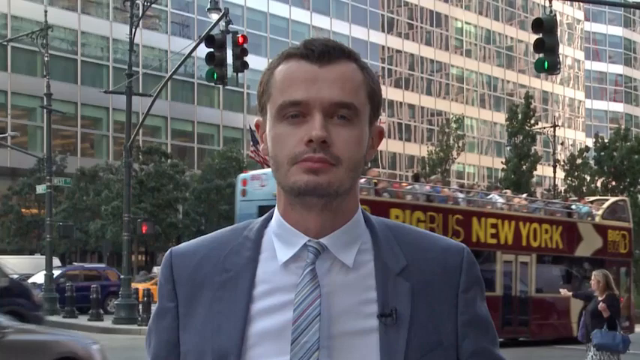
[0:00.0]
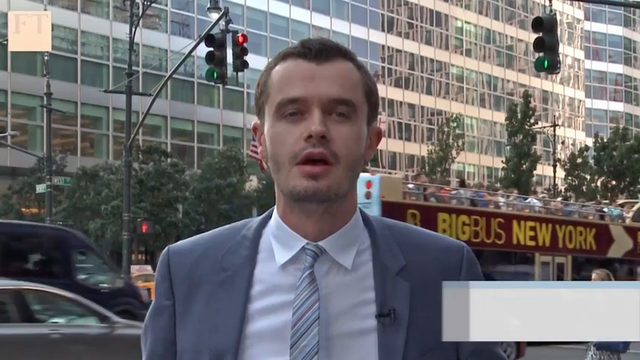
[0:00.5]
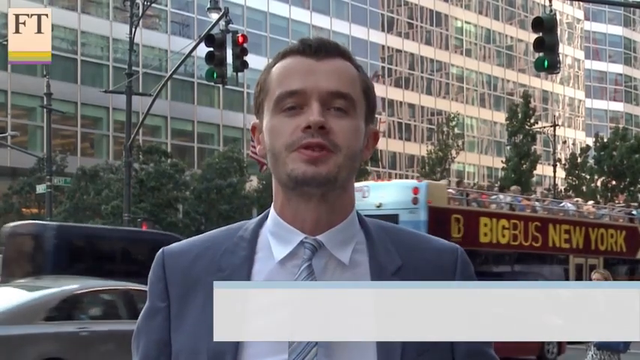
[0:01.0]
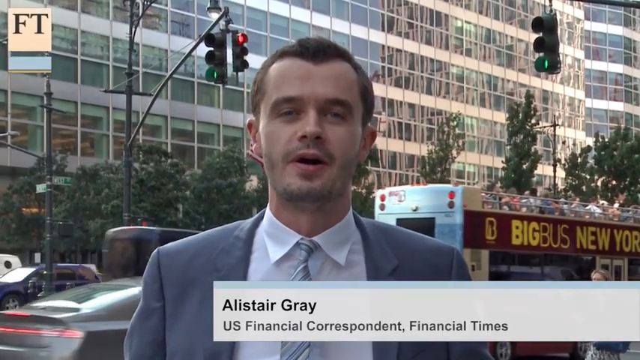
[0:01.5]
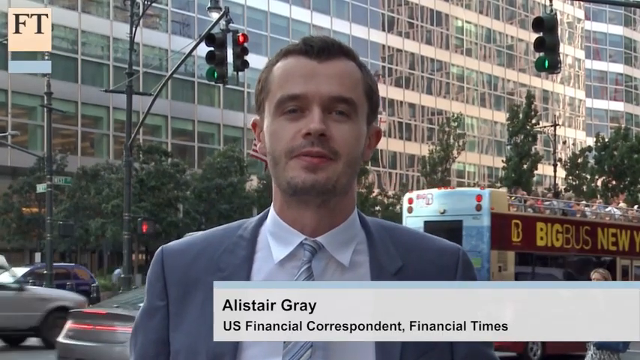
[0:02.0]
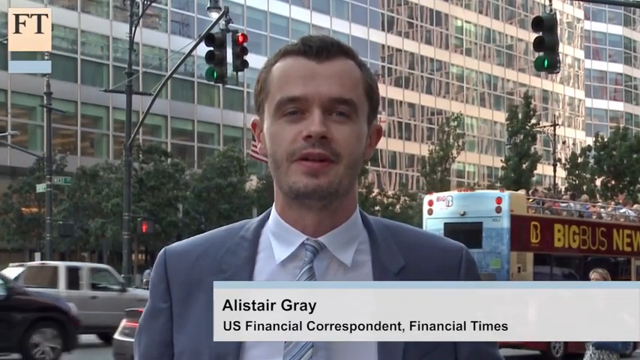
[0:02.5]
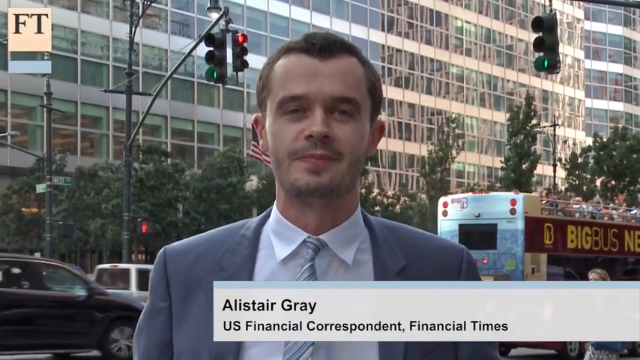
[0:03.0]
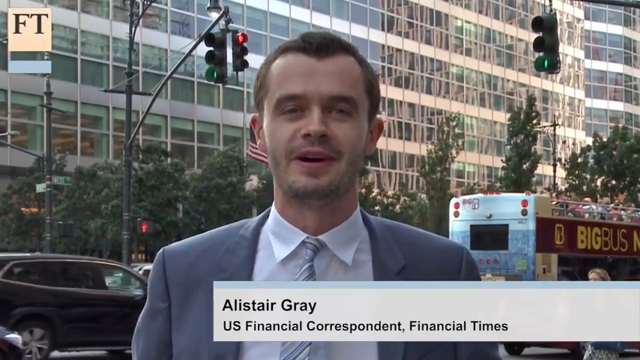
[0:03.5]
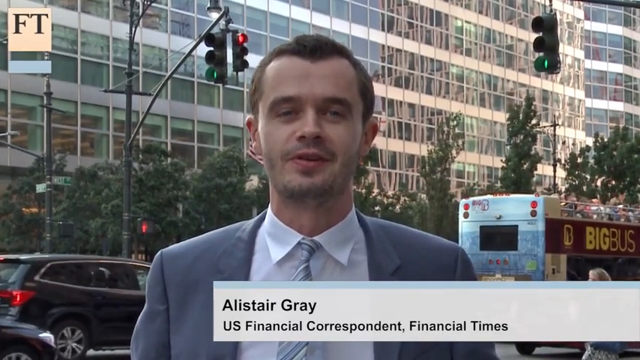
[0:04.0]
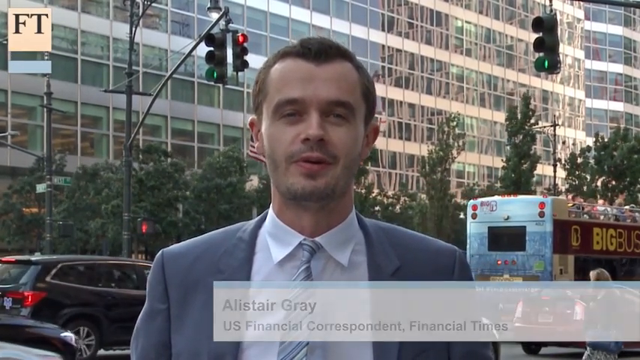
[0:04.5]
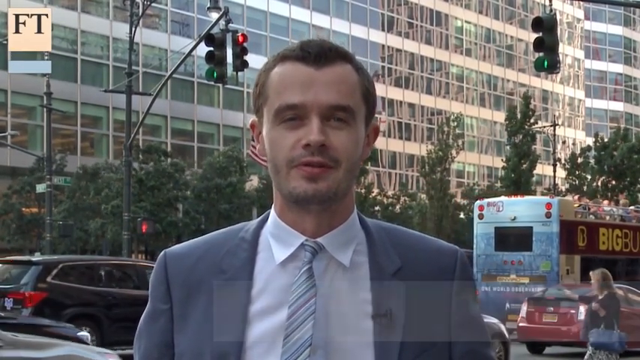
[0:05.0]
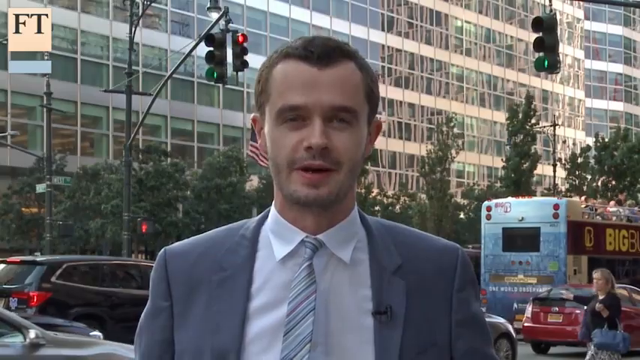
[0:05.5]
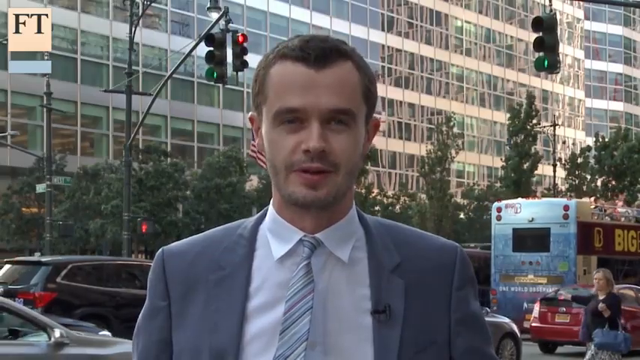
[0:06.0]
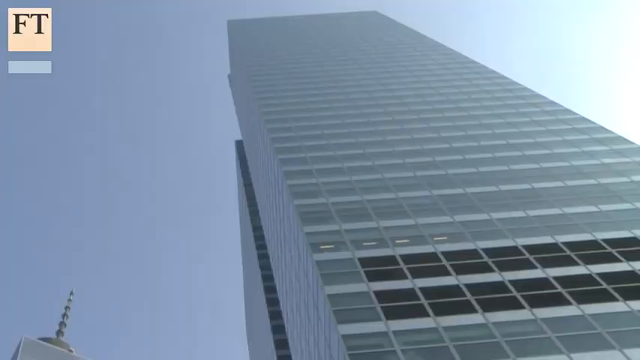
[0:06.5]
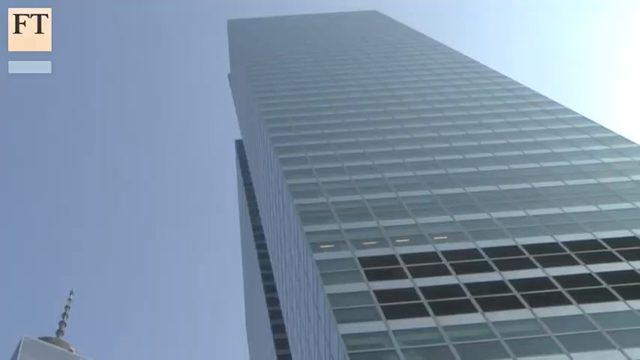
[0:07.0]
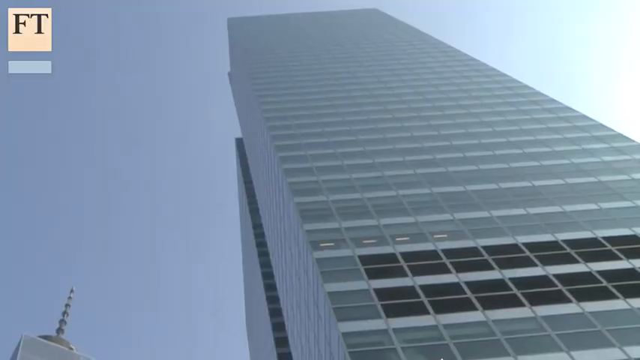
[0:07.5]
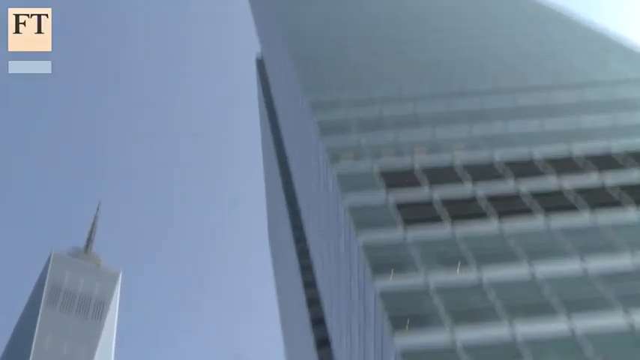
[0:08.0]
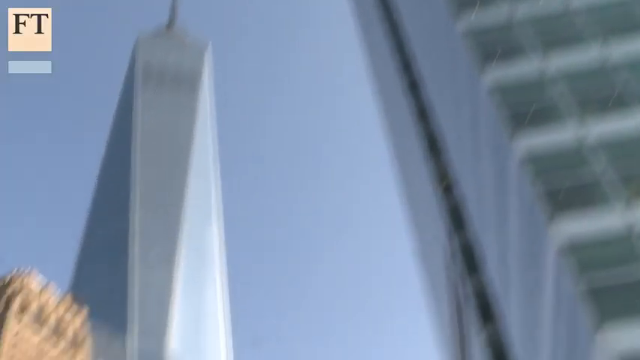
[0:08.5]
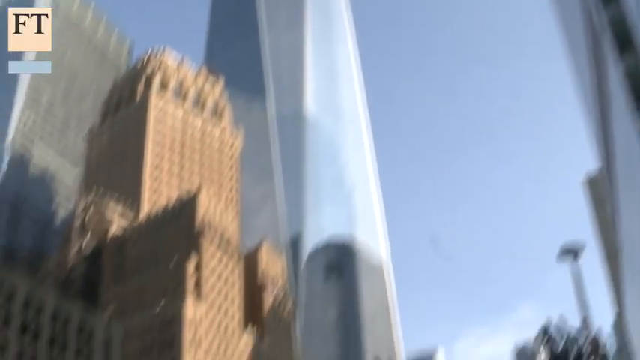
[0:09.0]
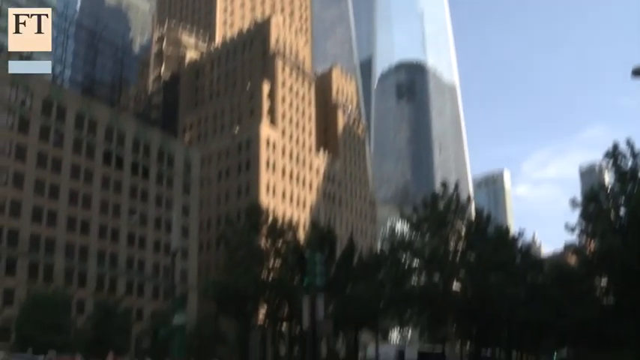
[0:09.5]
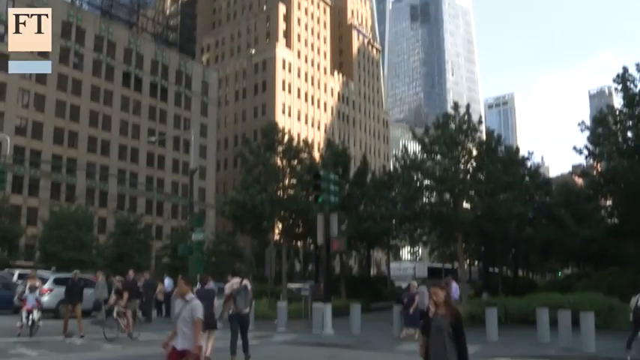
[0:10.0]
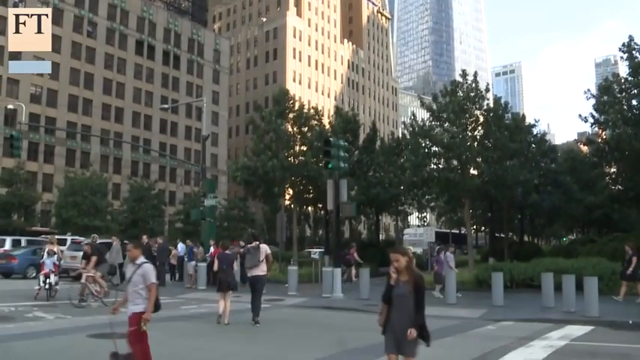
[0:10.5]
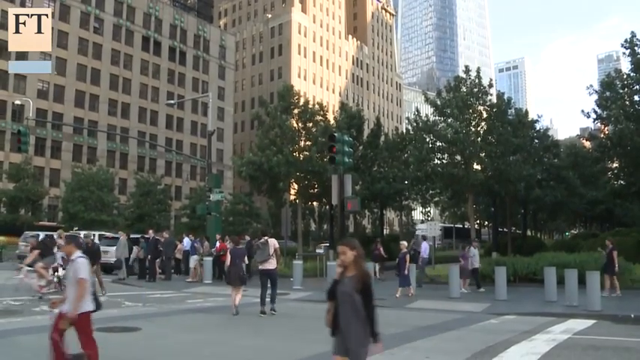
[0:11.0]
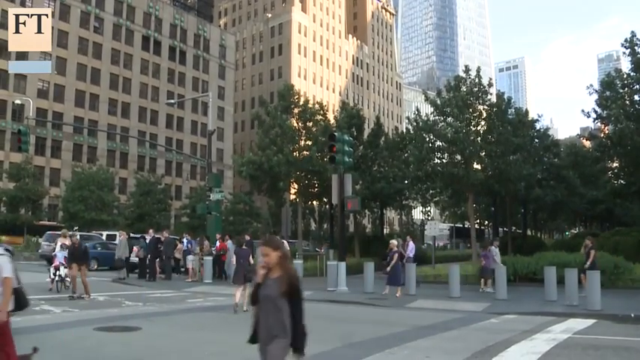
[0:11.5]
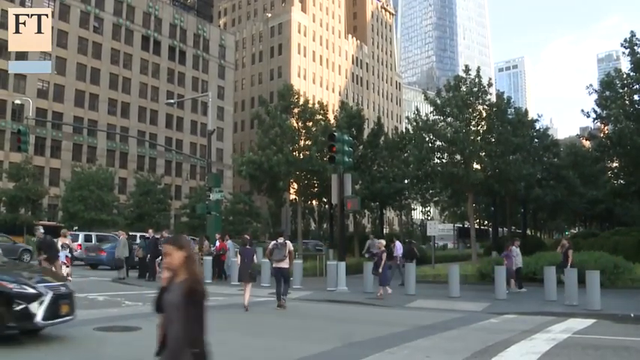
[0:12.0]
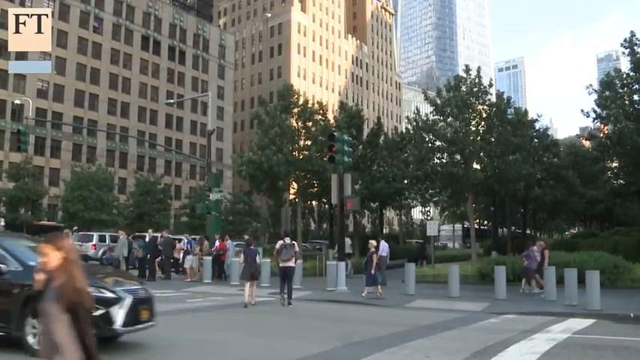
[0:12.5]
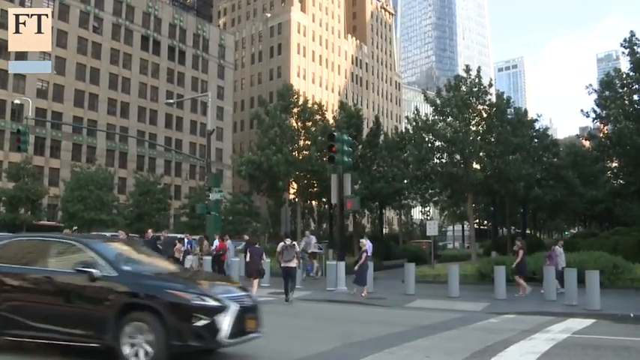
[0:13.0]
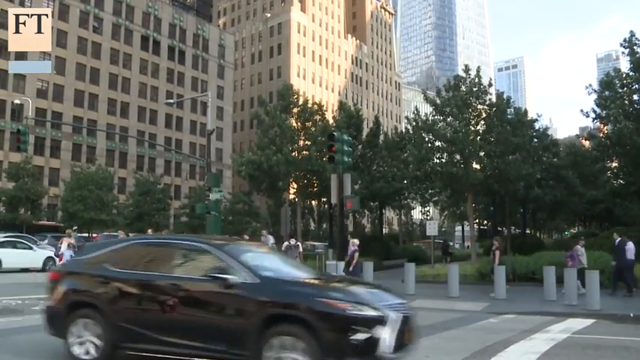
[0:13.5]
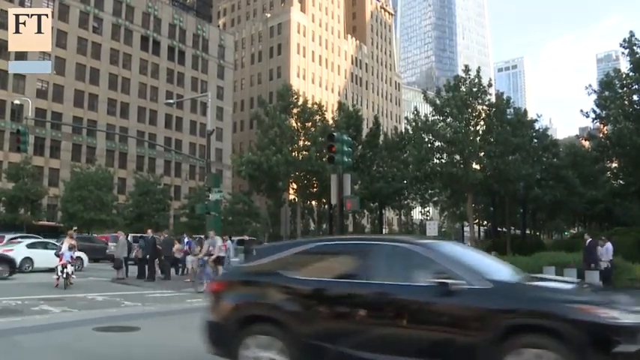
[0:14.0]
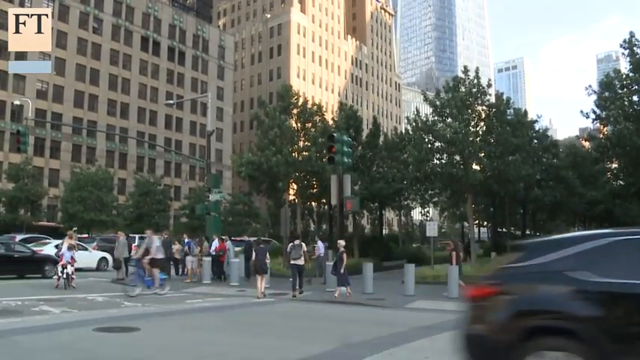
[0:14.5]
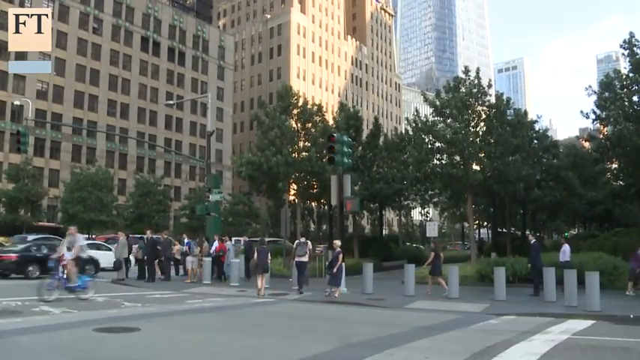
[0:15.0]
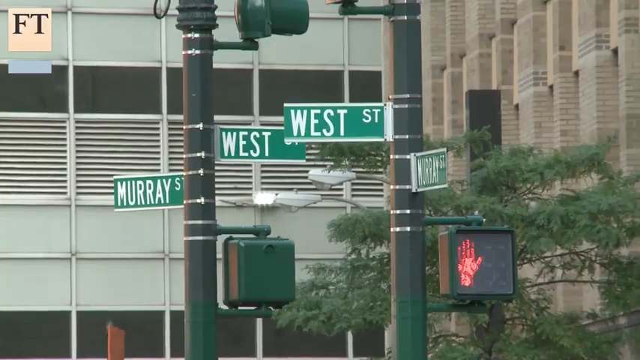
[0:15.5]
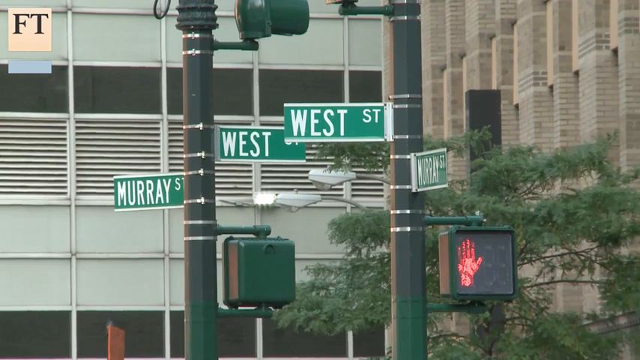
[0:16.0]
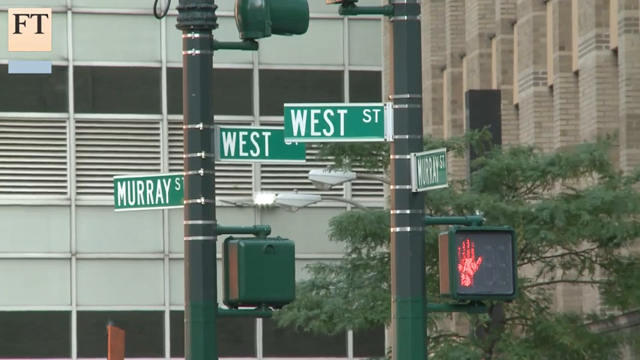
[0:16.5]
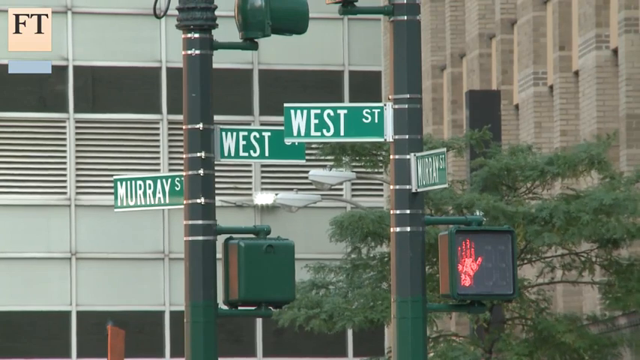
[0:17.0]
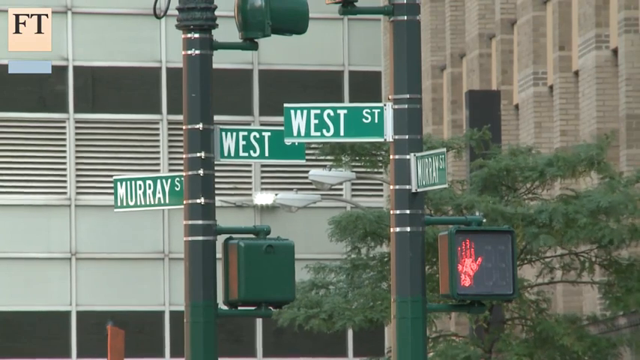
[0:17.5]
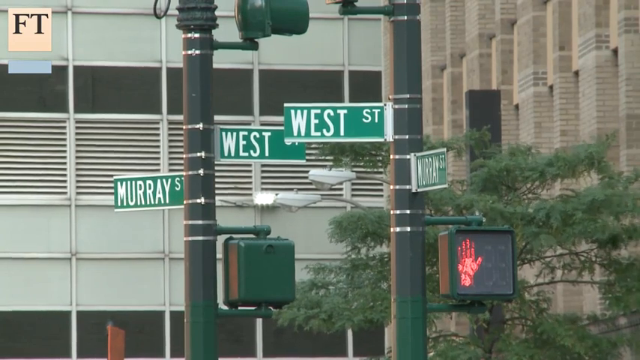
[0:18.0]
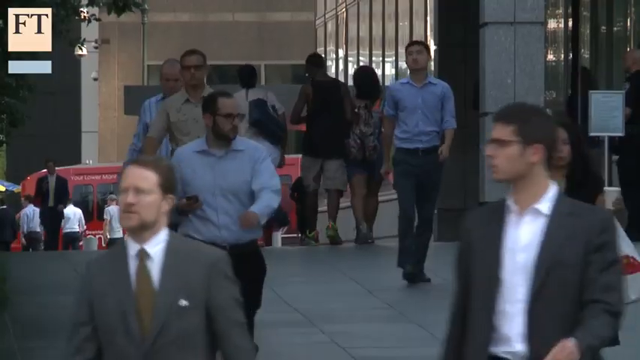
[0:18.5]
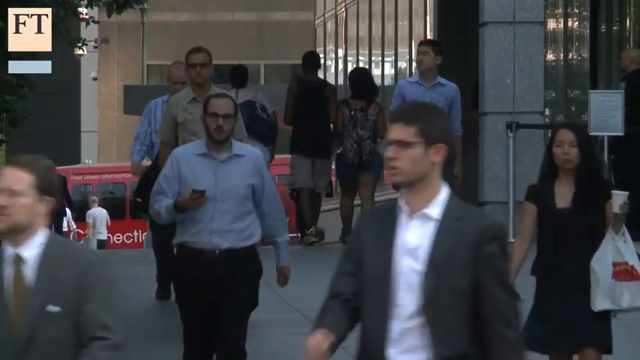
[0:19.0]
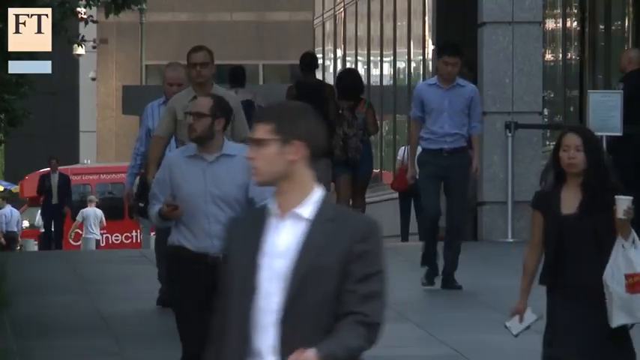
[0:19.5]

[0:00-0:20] The video opens with Alistair Gray, a U.S. financial correspondent for the Financial Times, standing in New York at West Street and Murray Street. Very tall skyscrapers rise behind him, with what looks like a building in front of another tall skyscraper, and there is a huge glass building behind him. Many people walk along the street, some in suits, some in dresses, some in button-down long sleeves, and people ride bikes. Concrete barriers line the sidewalk. A big tour bus behind him has "New York" on its side, and people sit on the very top of the bus. Heavy traffic flows both ways on the very busy street. In the median between the streets is a row of trees, all with leaves. It looks like spring or summer: people wear short sleeves, no jackets are visible, and the sun is shining.